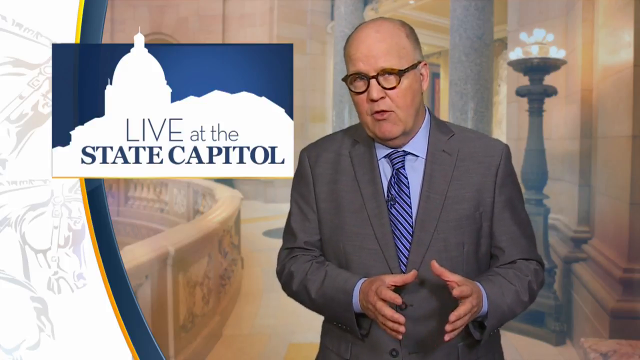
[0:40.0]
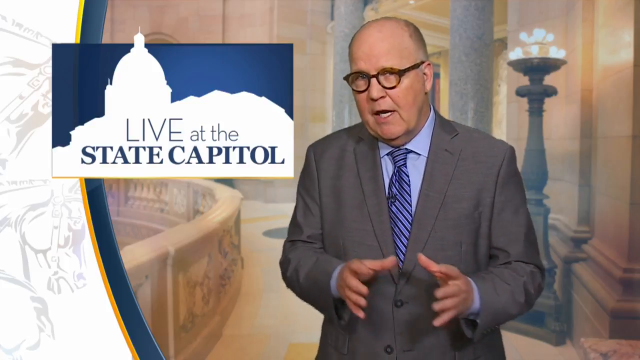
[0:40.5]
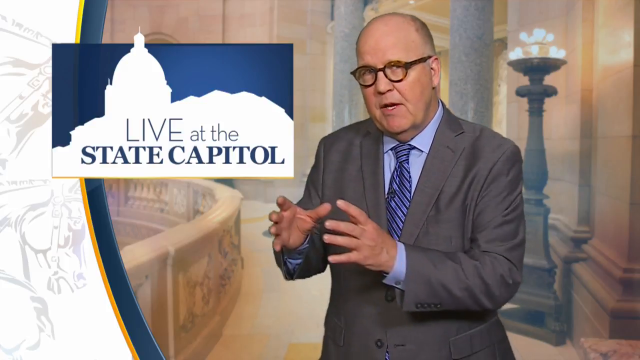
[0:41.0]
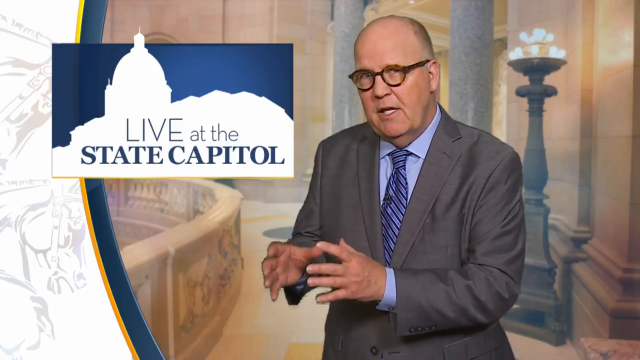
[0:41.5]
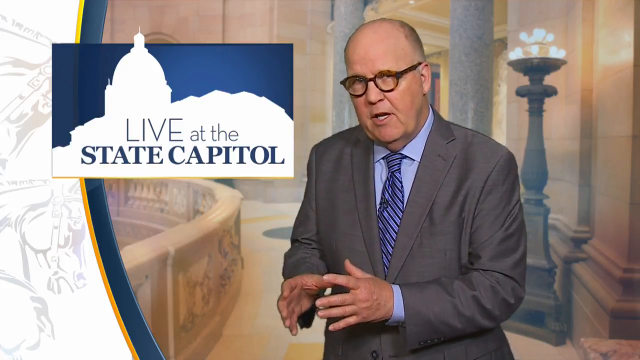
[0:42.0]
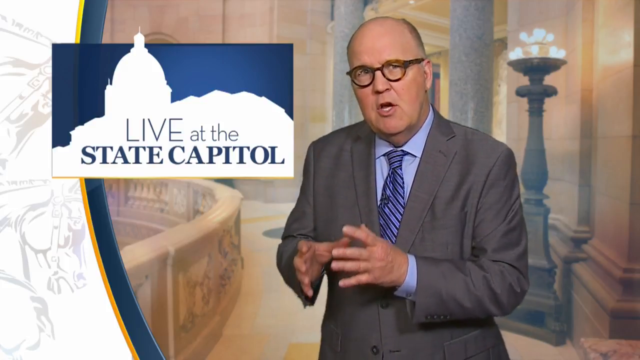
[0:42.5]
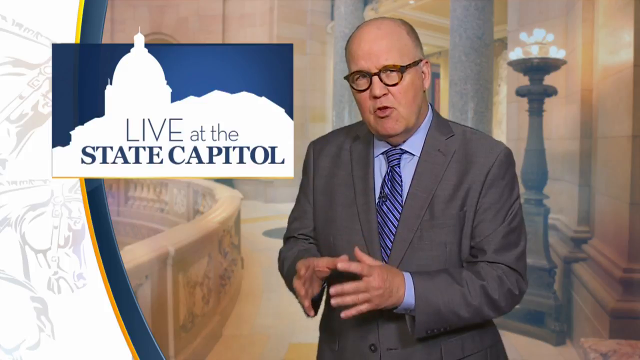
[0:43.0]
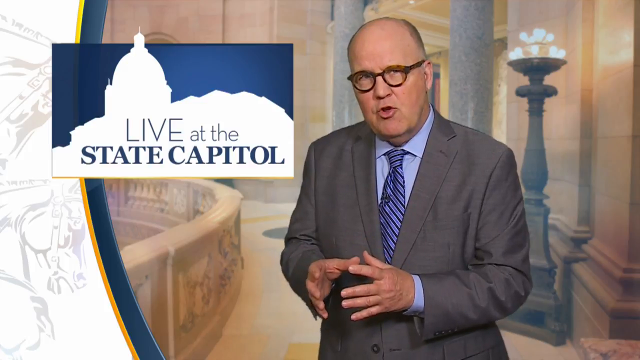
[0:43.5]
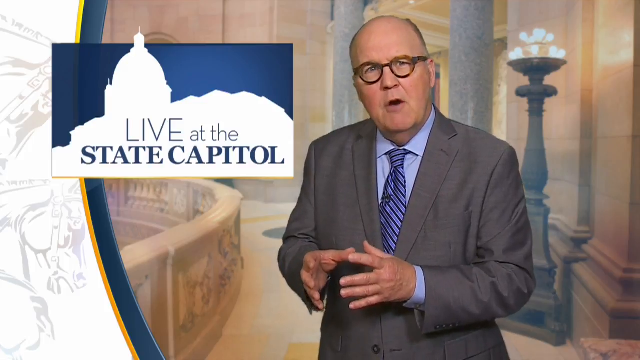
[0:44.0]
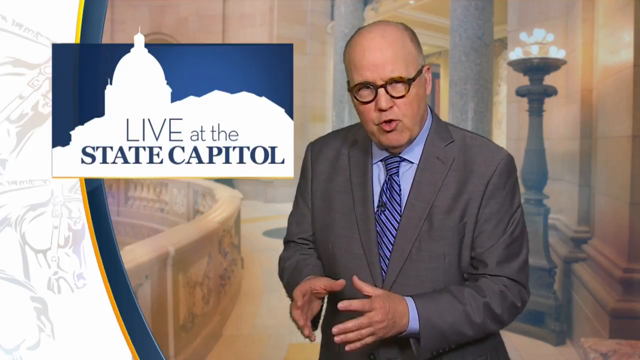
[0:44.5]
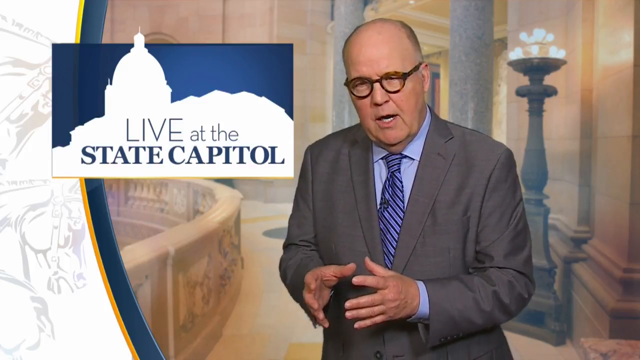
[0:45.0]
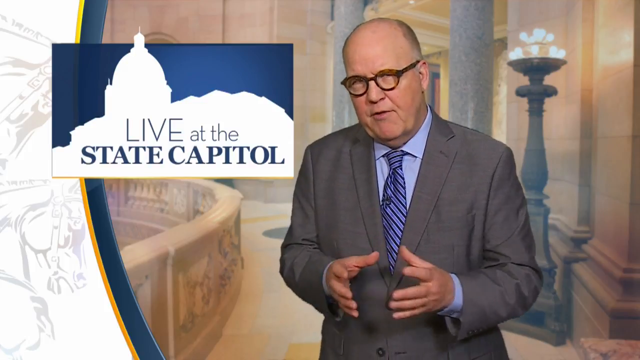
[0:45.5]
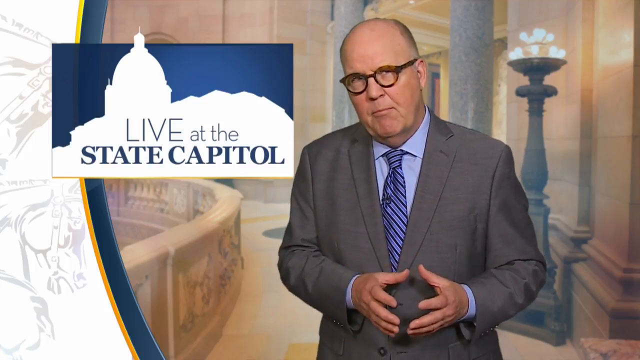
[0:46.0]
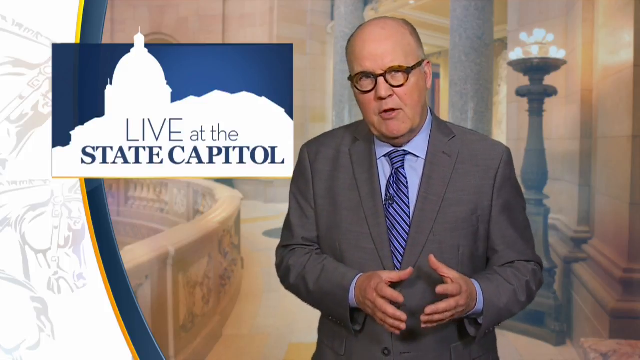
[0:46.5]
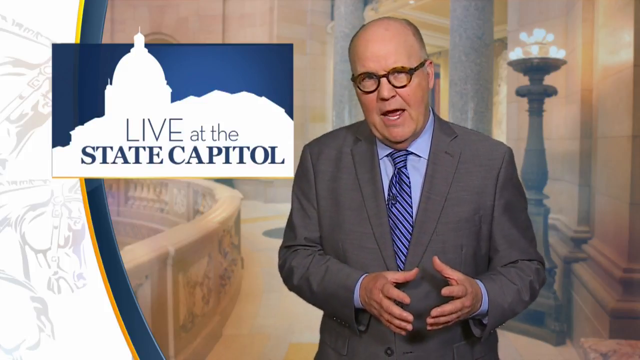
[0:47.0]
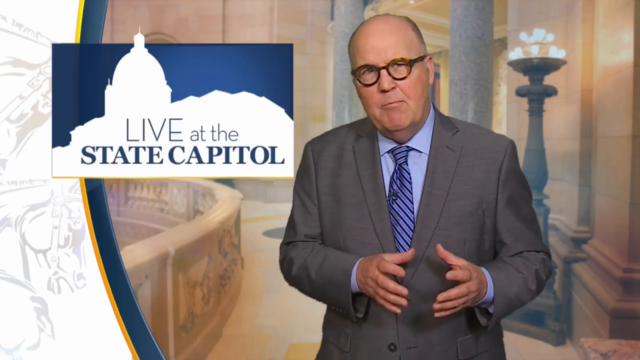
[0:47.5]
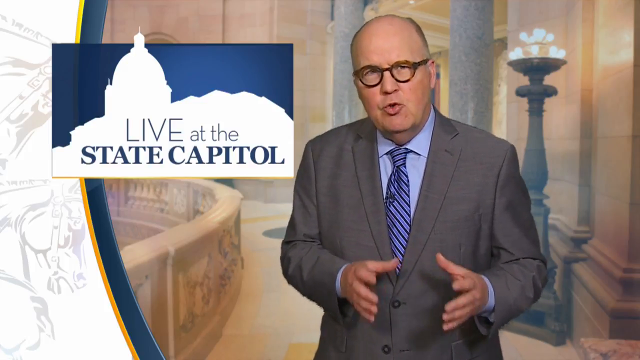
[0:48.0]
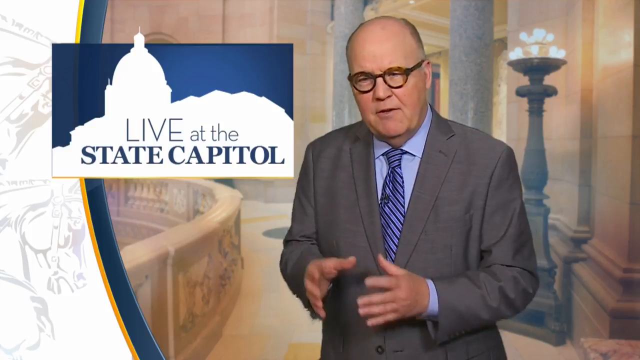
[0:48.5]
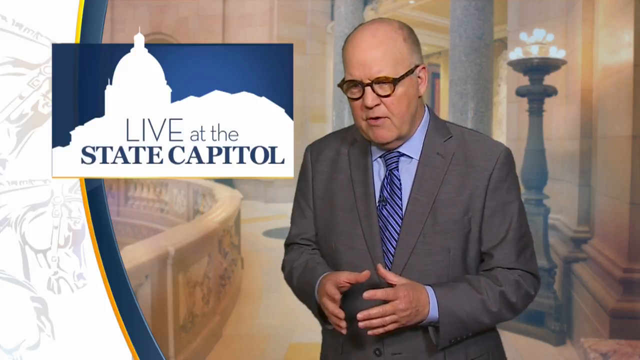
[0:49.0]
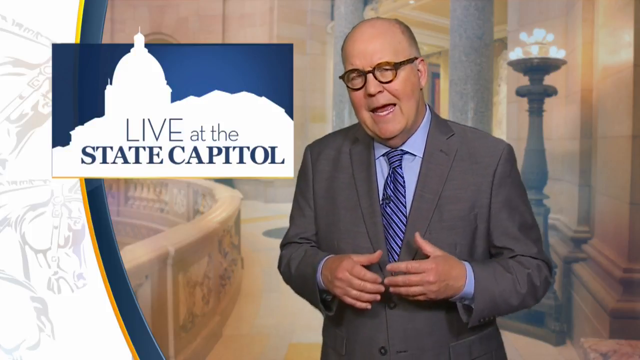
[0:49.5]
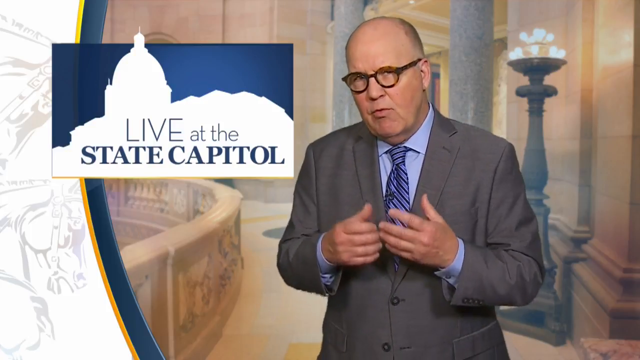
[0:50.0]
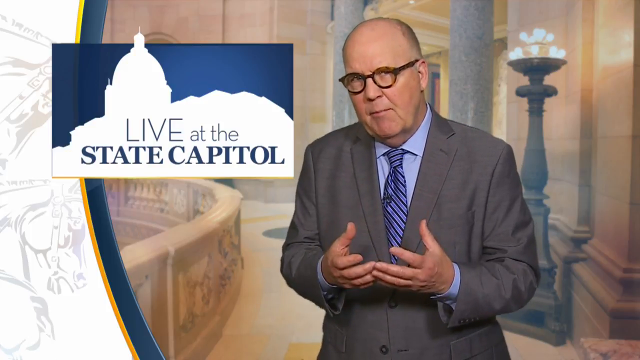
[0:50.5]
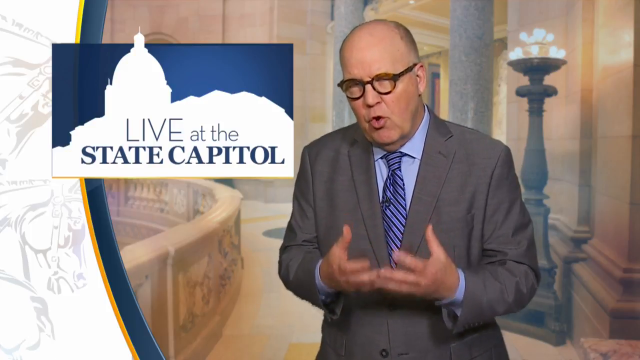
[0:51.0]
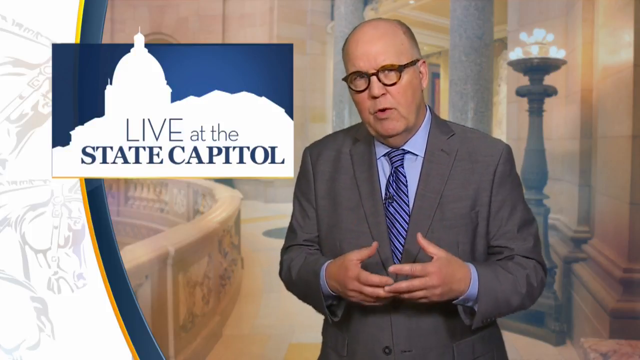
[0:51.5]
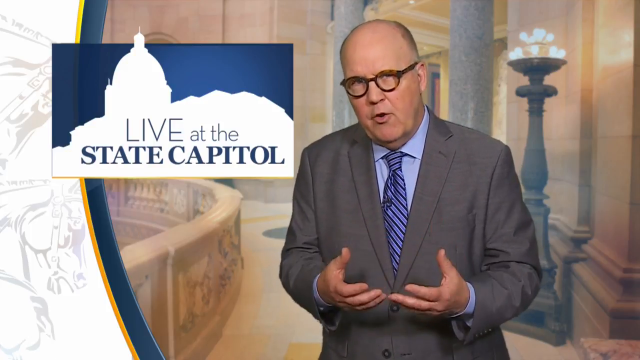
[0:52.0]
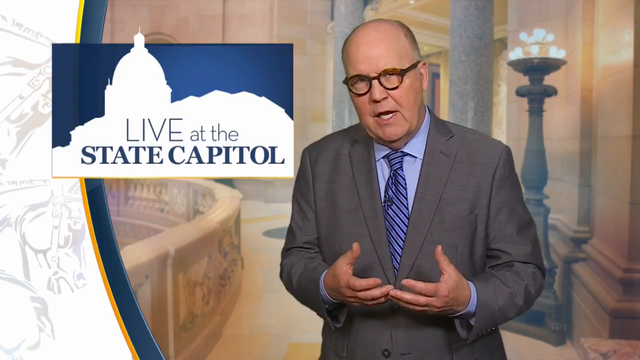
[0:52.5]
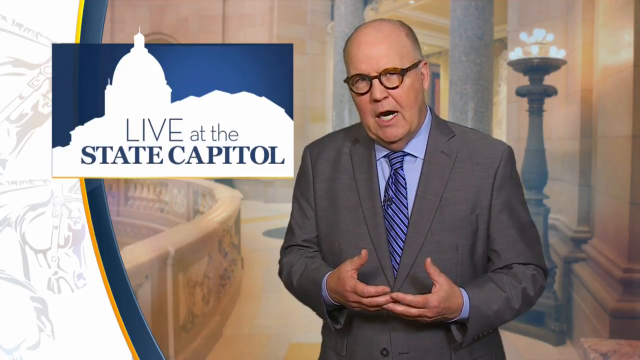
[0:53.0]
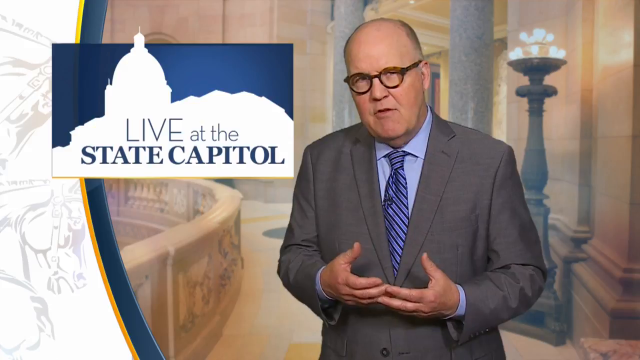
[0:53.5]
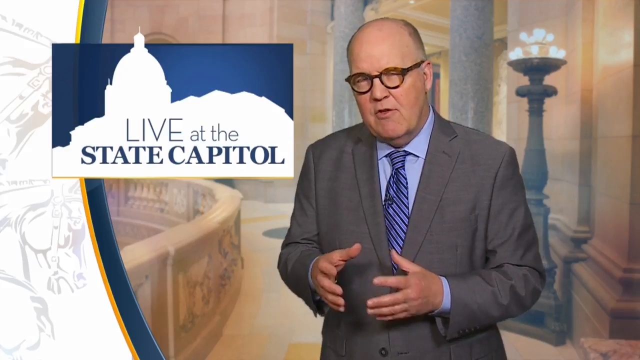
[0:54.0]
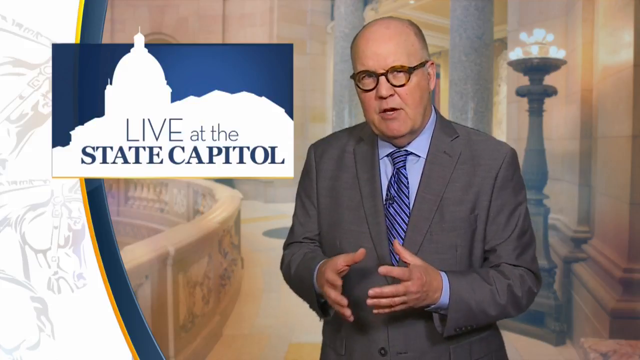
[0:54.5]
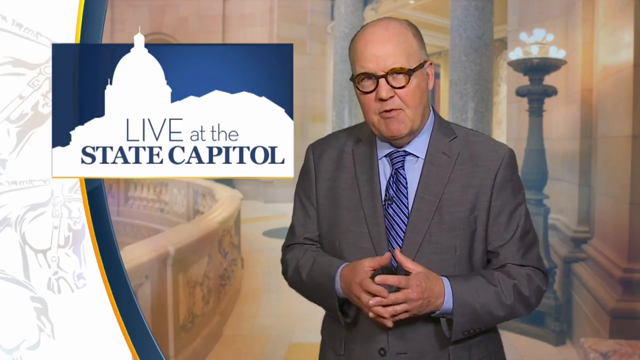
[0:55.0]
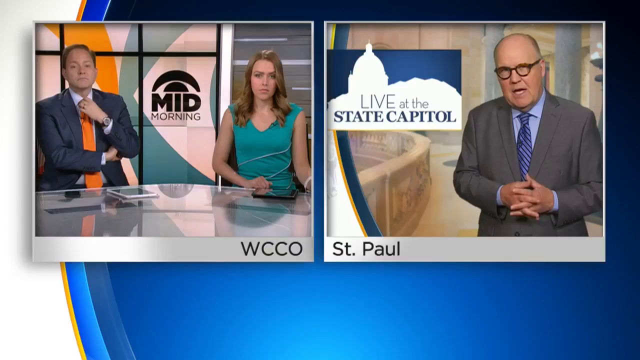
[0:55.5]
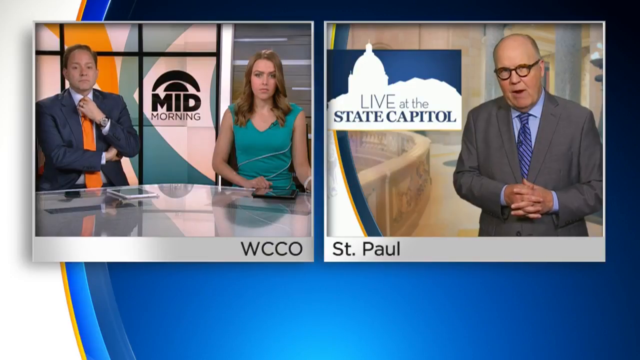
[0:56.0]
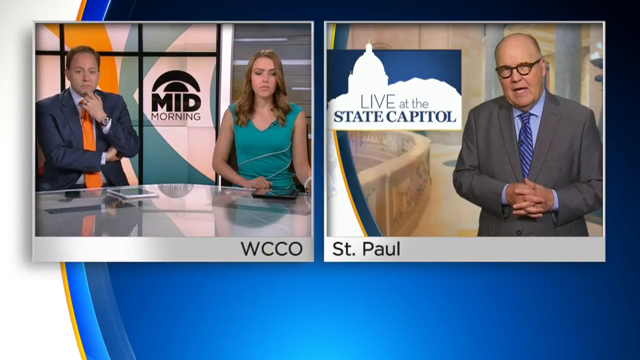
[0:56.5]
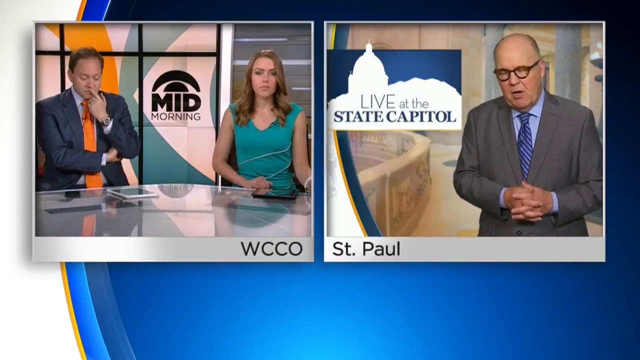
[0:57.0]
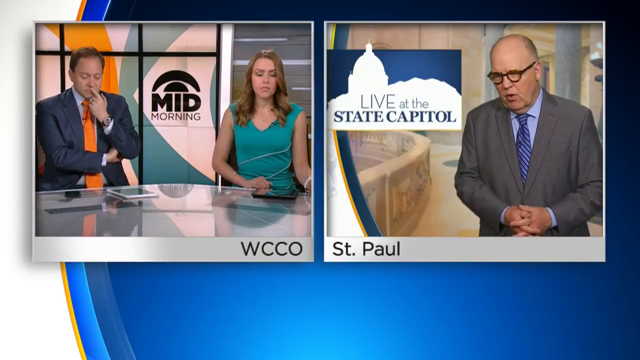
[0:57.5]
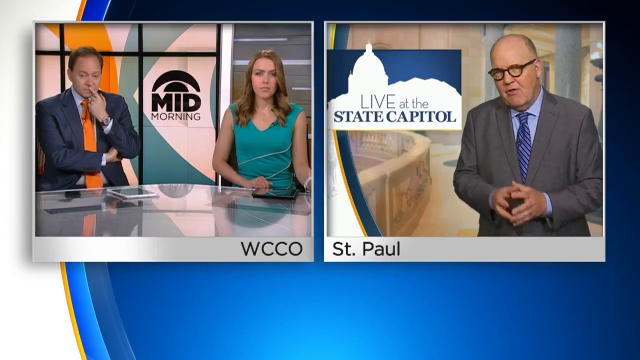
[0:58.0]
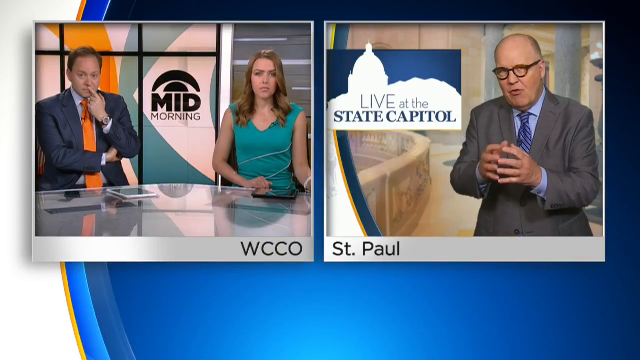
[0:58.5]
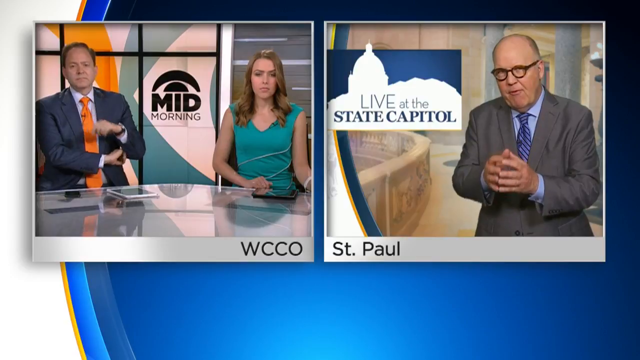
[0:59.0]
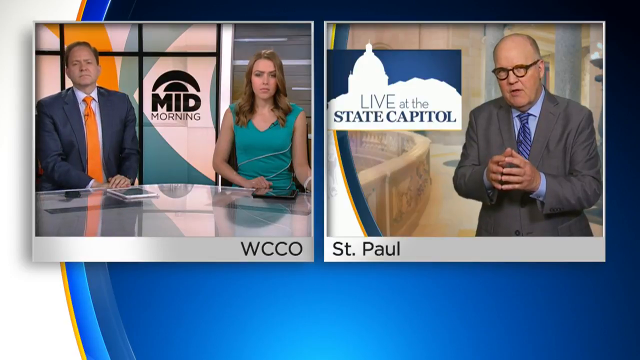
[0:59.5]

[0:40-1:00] The man live at the state capitol gestures with his hands as if holding a sphere between them, moving it back and forth. The view returns to the big screen of the WCCO studios with Jason and the woman, who appear to move into a back-and-forth commentary. Jason looks contemplative; as the camera catches him, he quickly removes his hand from his face, possibly as if he had been propping his head up.